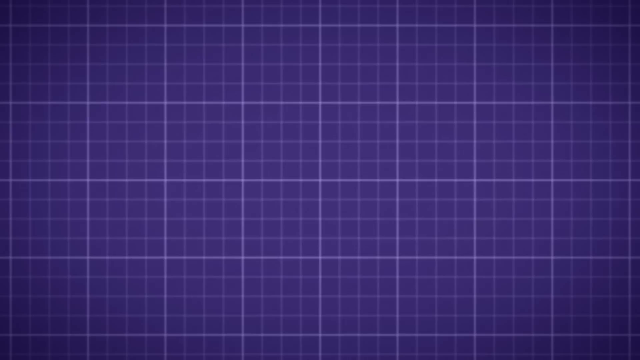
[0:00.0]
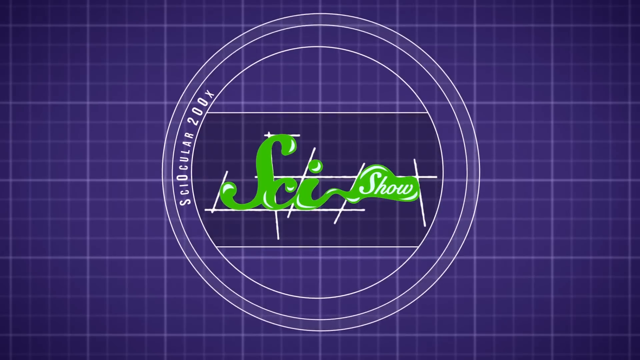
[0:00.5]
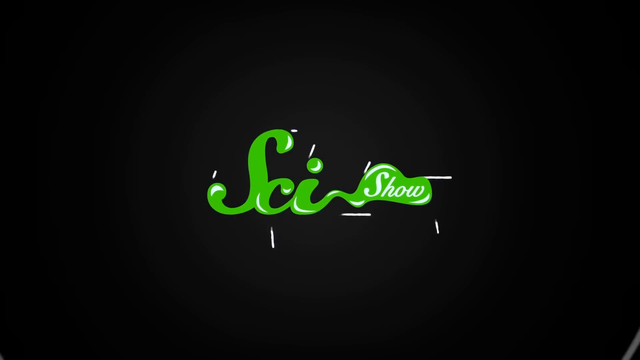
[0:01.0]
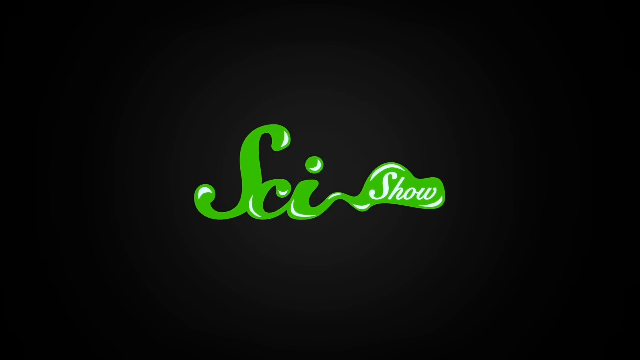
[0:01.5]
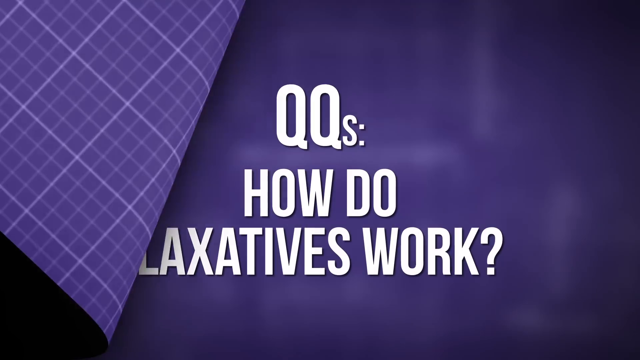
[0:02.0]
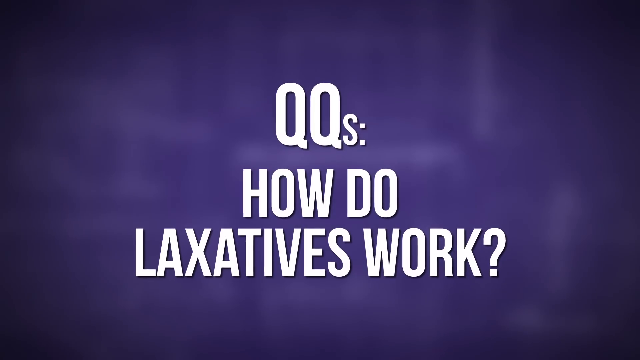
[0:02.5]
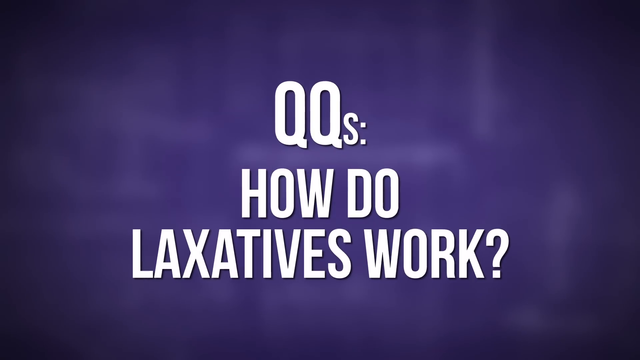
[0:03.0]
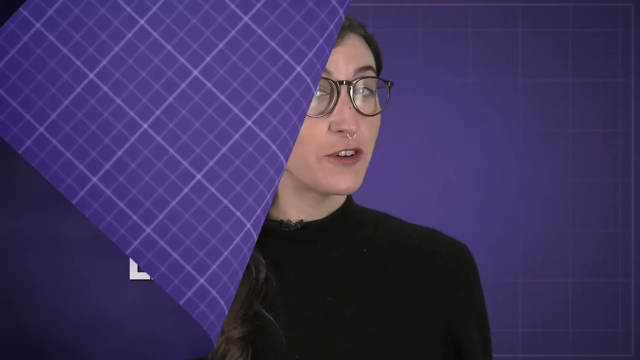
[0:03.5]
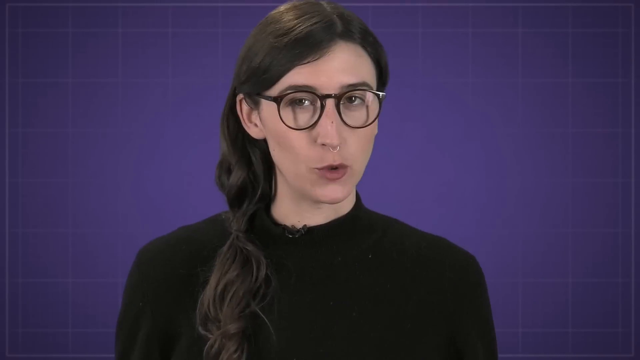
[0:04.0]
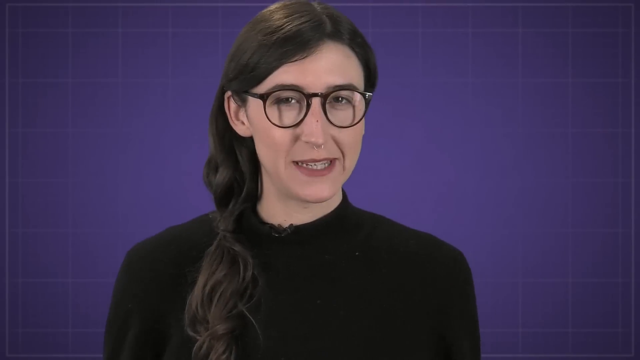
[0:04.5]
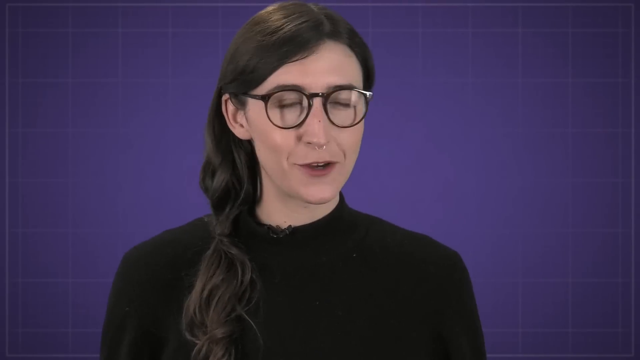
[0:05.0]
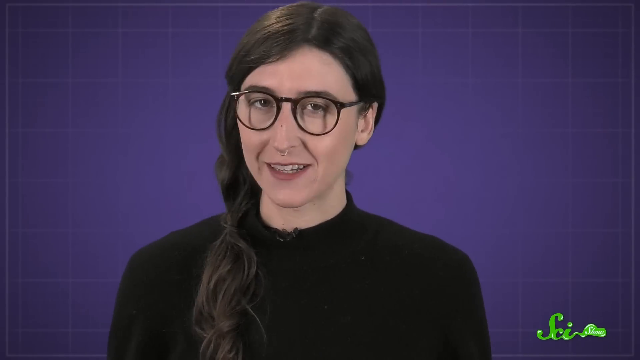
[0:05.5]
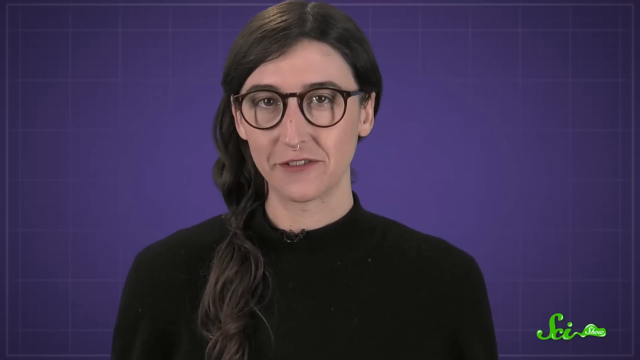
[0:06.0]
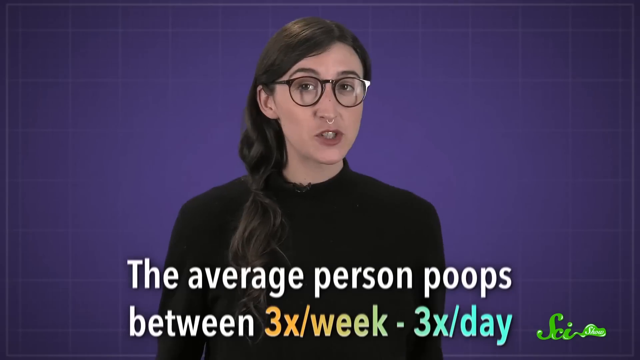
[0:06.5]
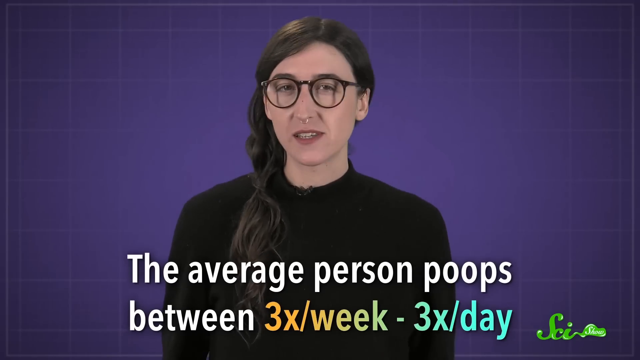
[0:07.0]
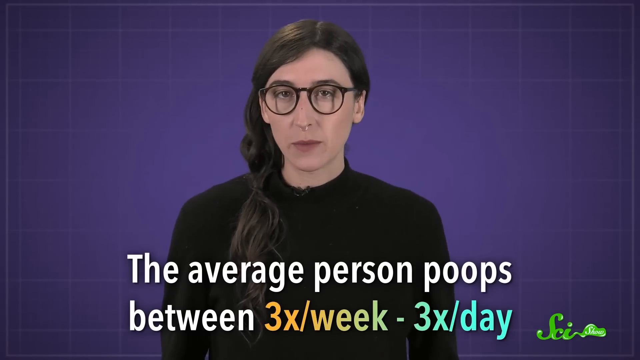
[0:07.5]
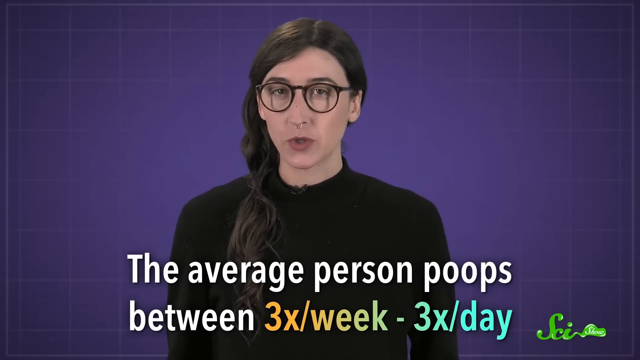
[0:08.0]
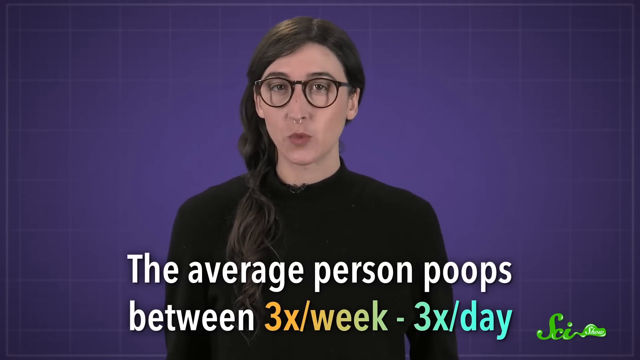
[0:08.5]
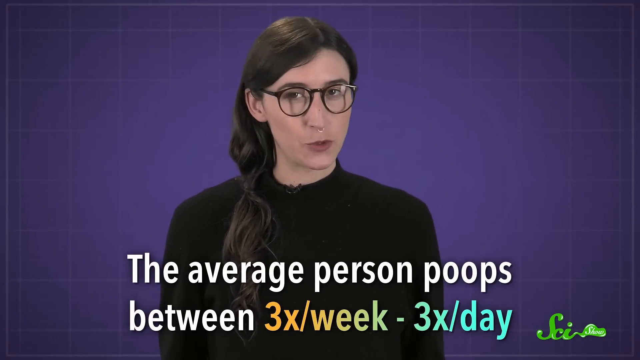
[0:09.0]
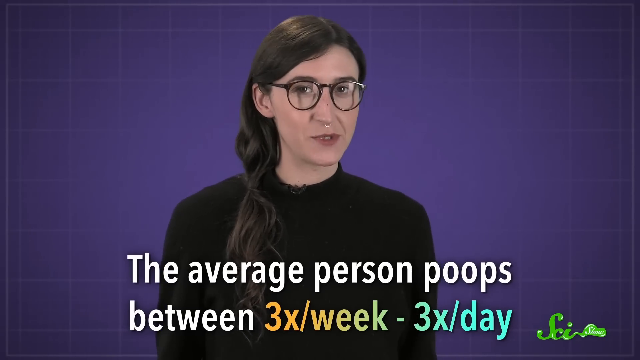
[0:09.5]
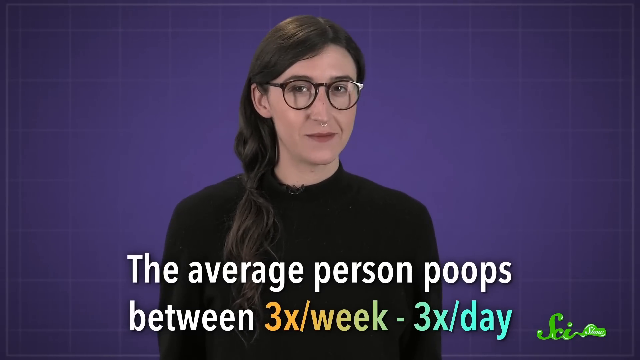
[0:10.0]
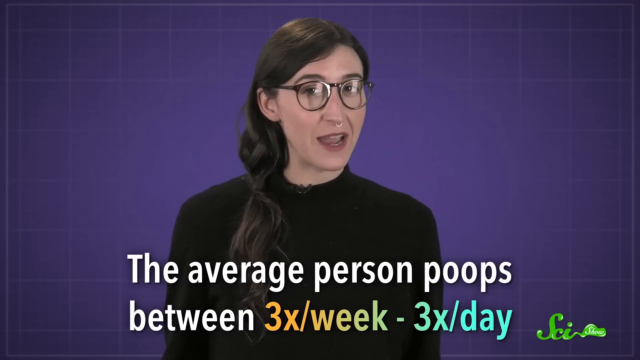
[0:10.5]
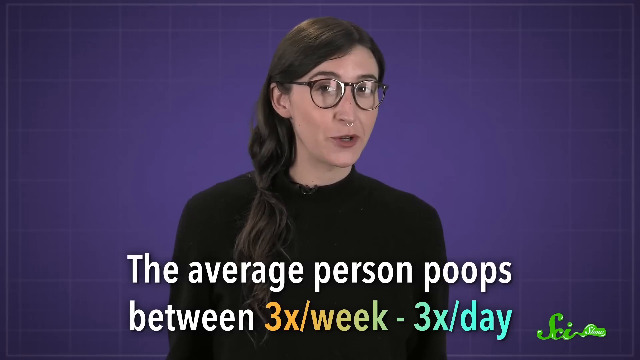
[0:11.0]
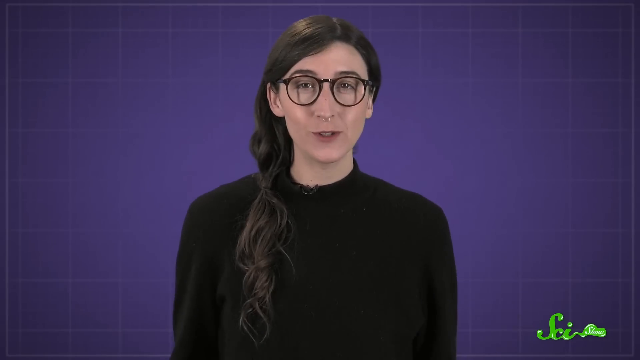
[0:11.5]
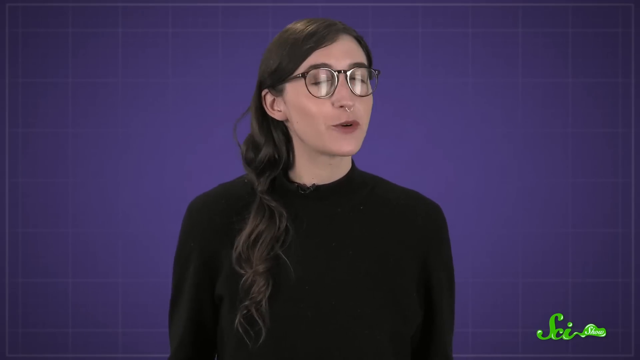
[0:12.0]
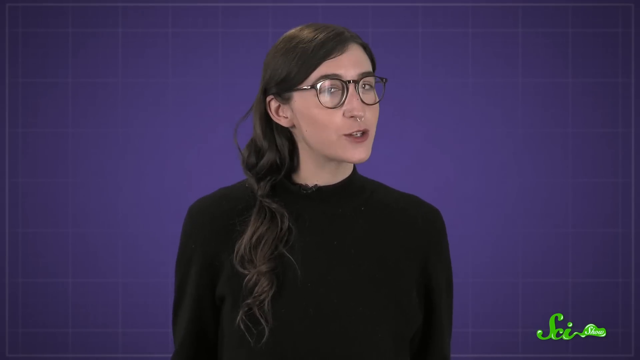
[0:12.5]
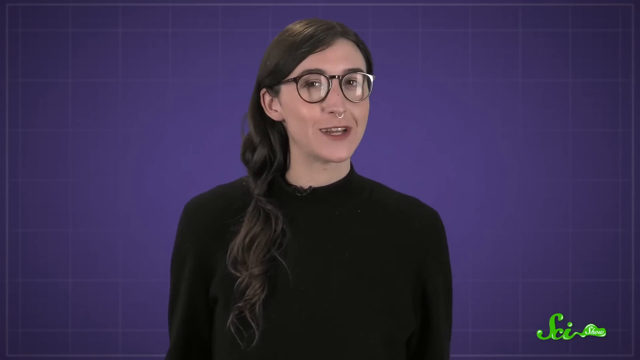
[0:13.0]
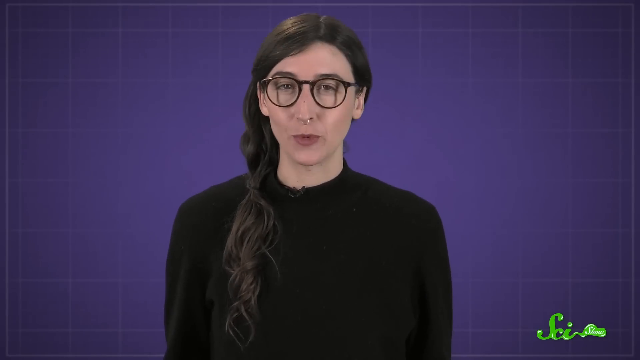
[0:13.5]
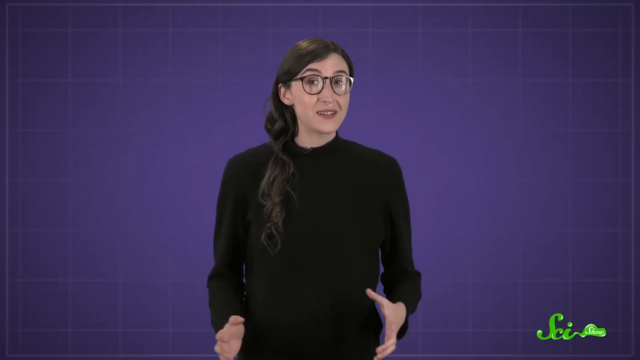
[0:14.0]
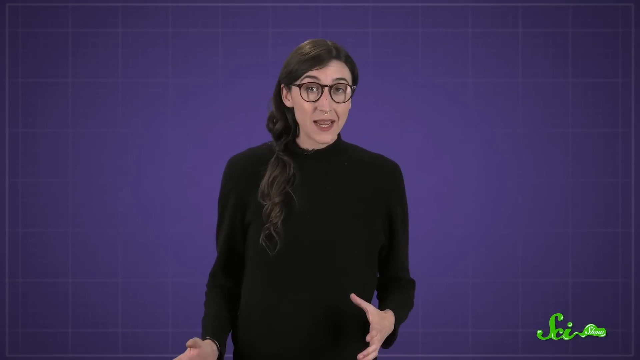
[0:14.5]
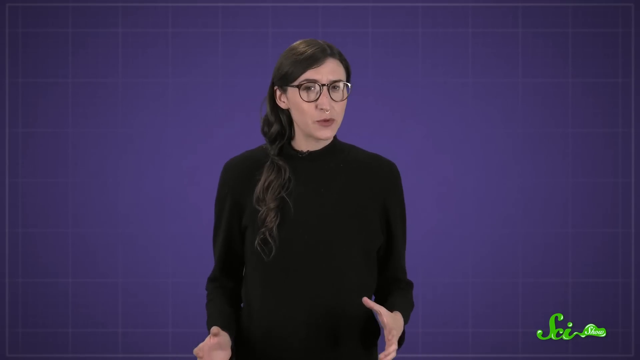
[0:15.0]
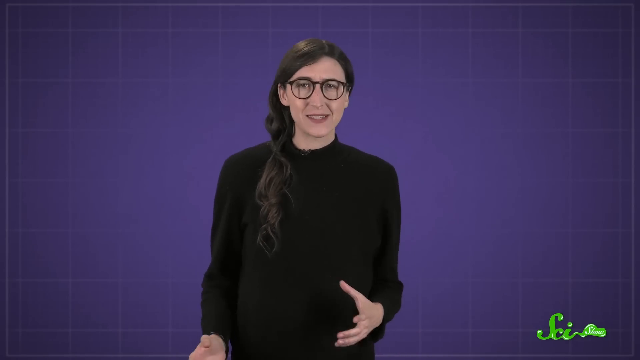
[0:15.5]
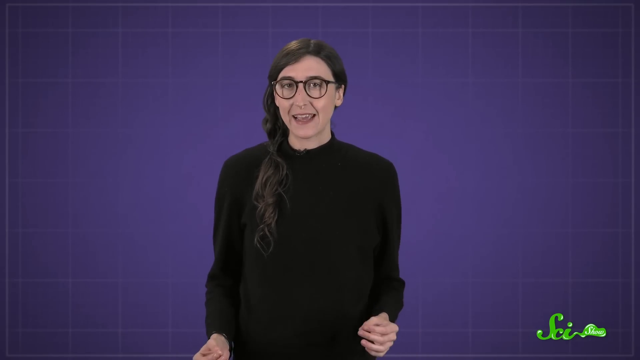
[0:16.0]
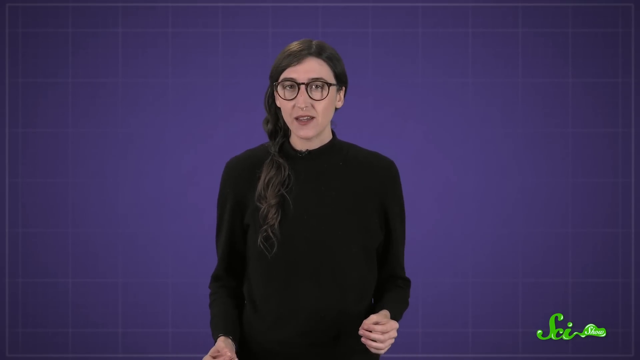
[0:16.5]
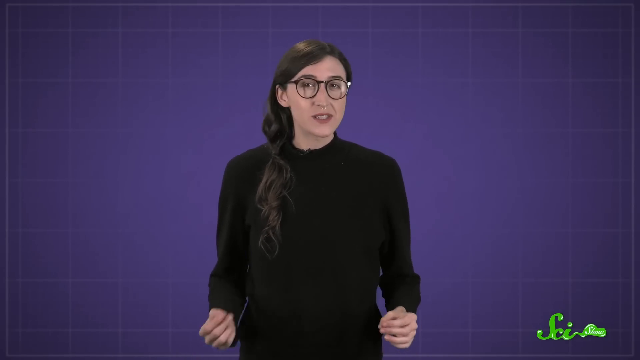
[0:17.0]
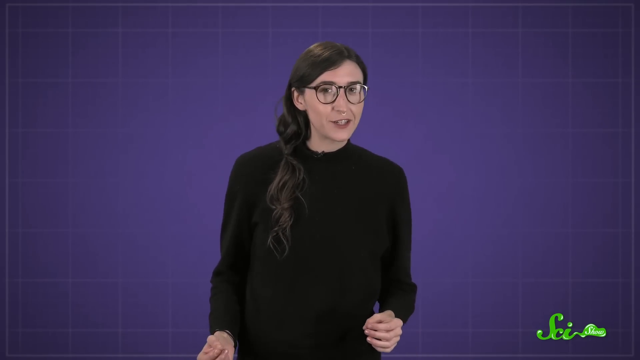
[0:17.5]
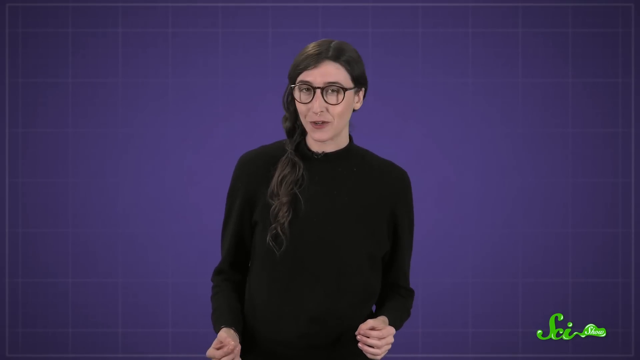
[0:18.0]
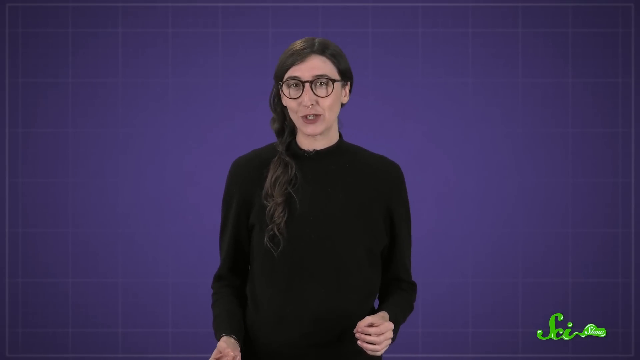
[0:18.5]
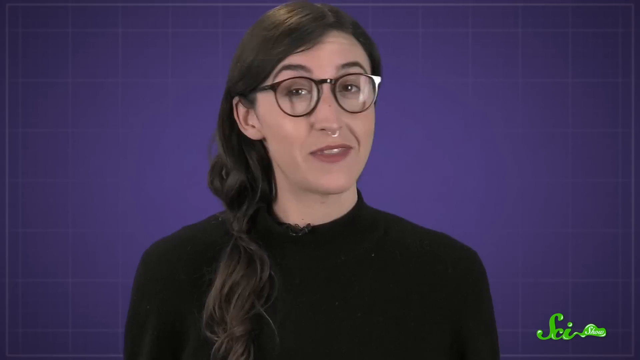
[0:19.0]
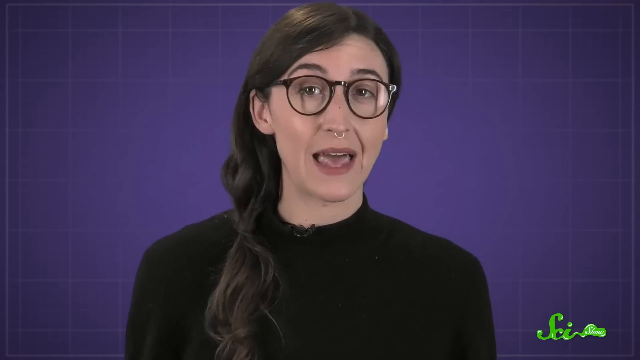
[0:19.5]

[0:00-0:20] A blue screen shows the text "SciShow" and "How do laxatives work?" A woman then appears on screen wearing a black turtleneck sweater and glasses, with very long dark brown hair. She is speaking and looking at the camera, and she appears to be standing in front of some type of purple background. Text reads "the average person poops between three times a week, three times a day." She seems very interested in the subject she is talking about.